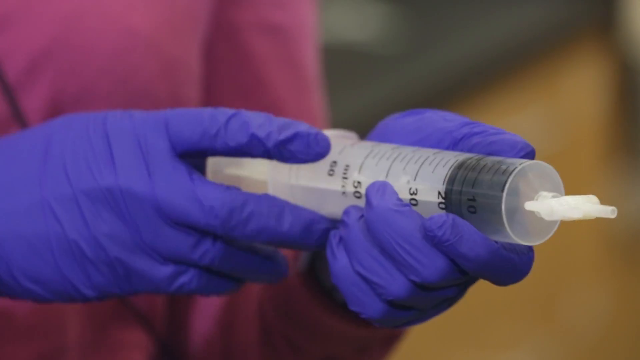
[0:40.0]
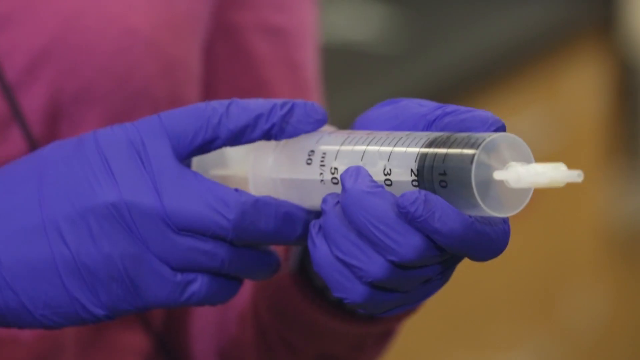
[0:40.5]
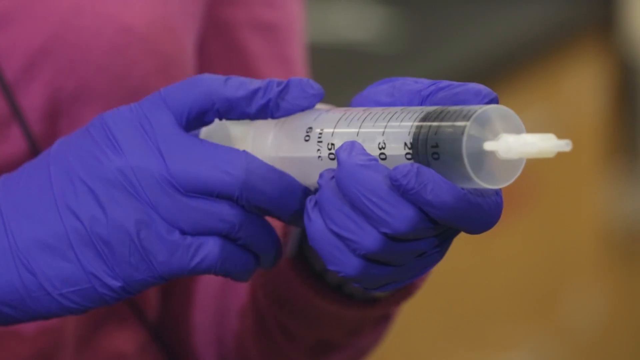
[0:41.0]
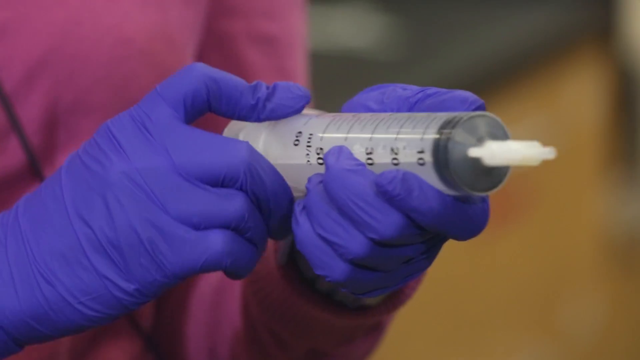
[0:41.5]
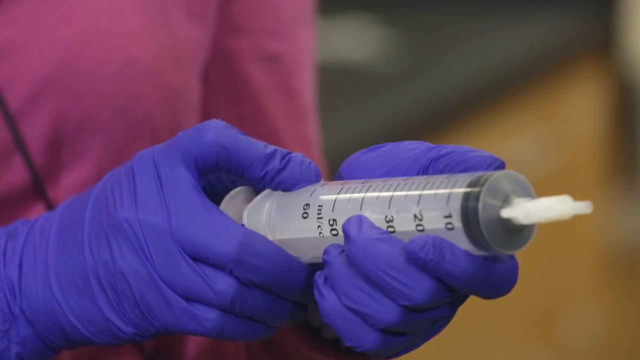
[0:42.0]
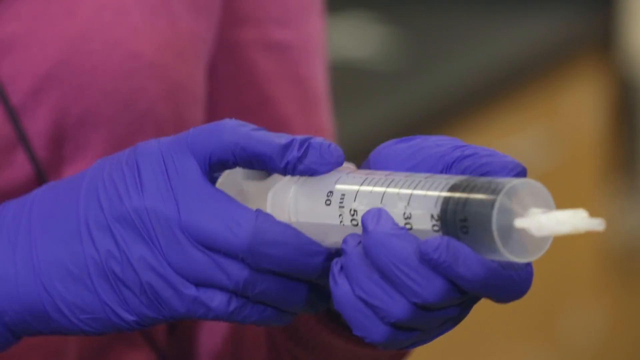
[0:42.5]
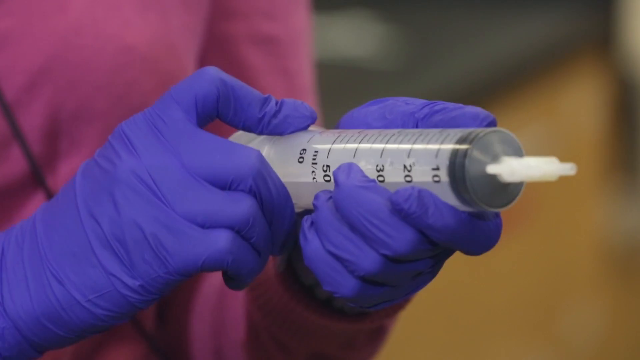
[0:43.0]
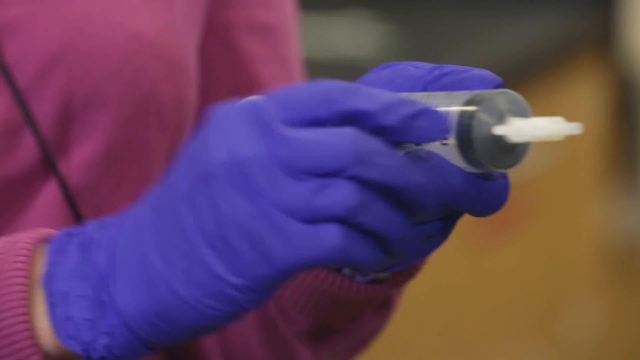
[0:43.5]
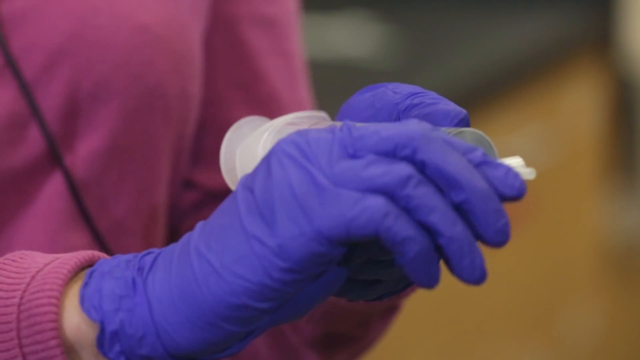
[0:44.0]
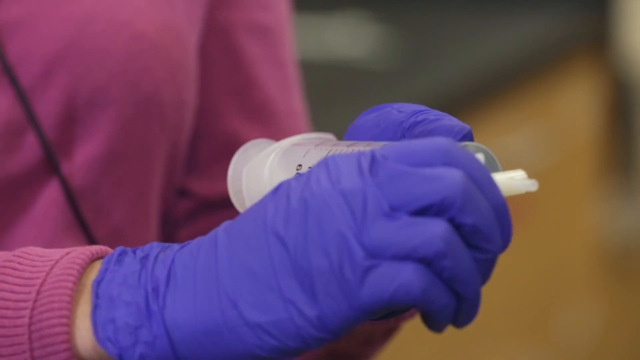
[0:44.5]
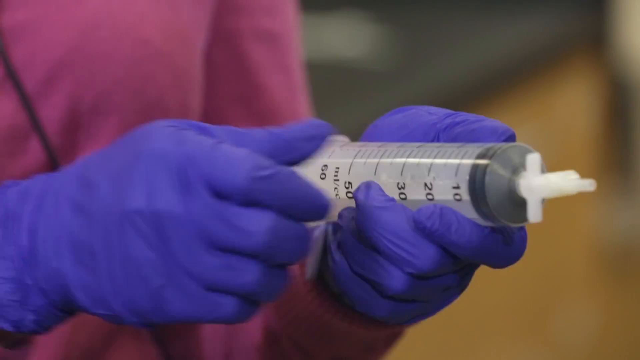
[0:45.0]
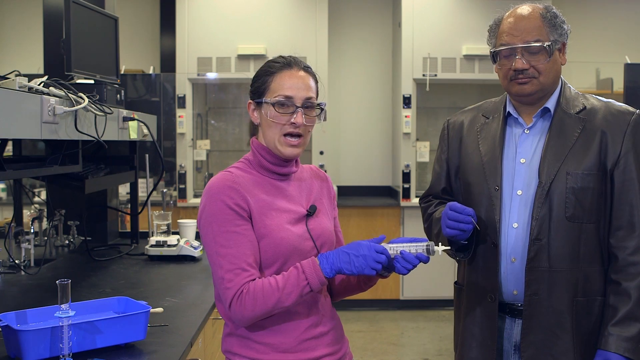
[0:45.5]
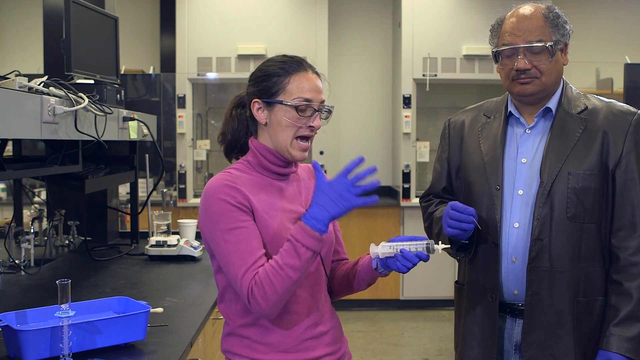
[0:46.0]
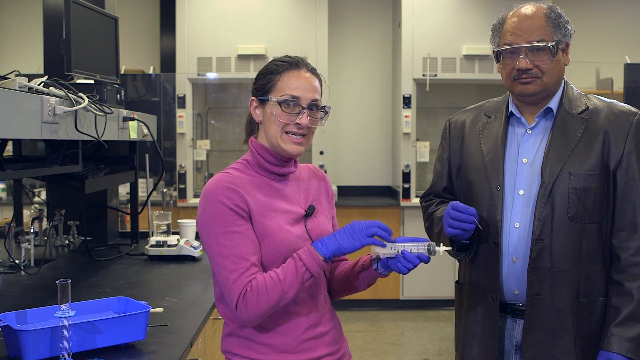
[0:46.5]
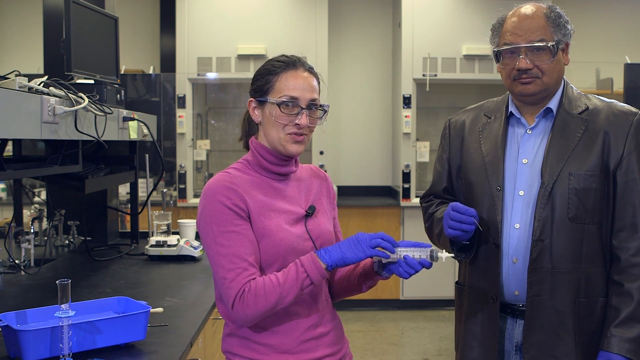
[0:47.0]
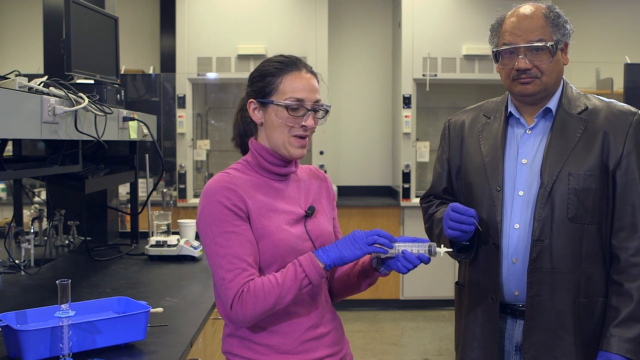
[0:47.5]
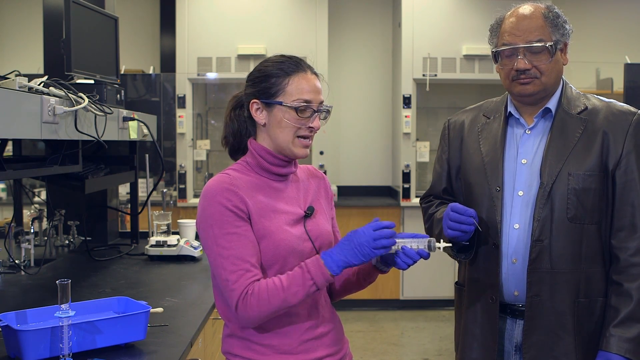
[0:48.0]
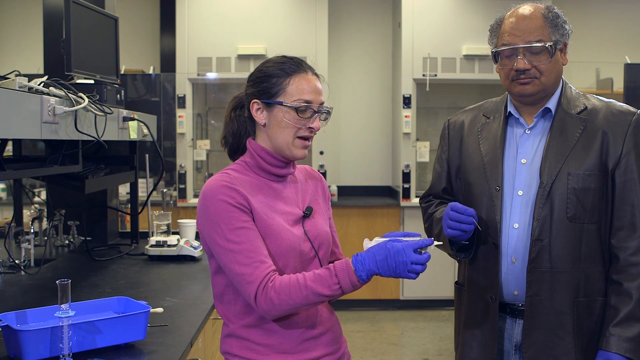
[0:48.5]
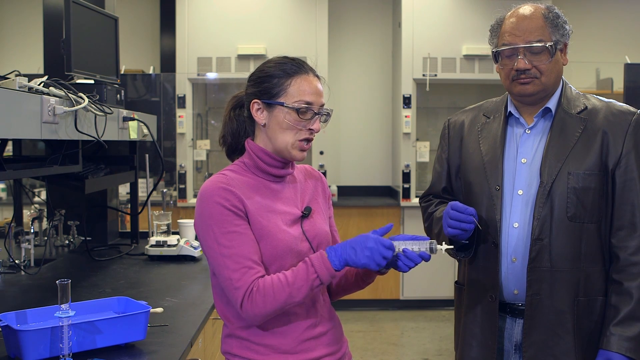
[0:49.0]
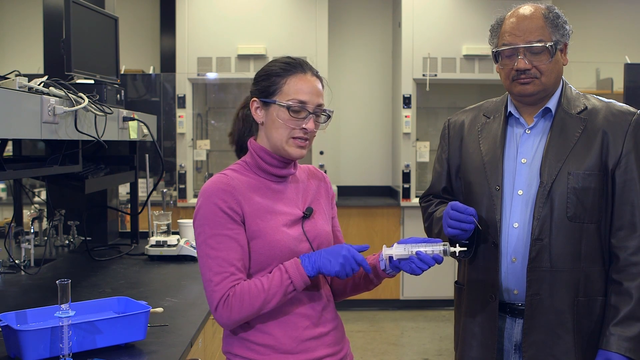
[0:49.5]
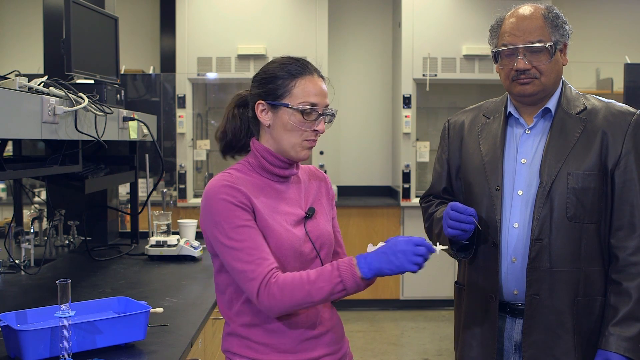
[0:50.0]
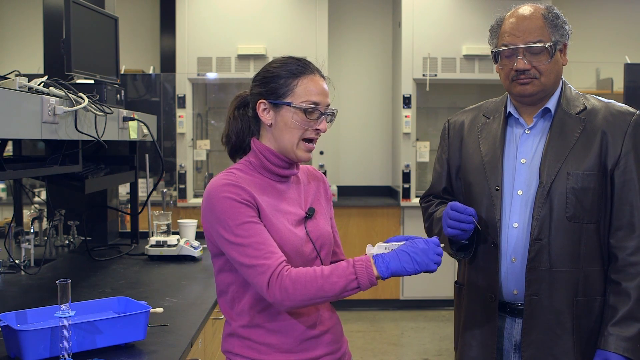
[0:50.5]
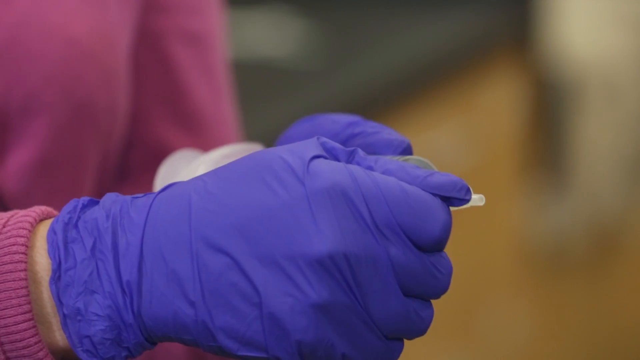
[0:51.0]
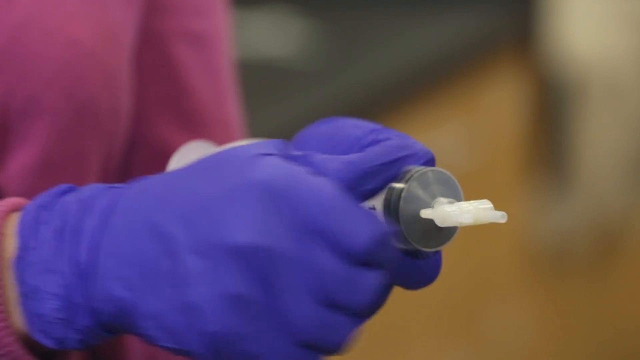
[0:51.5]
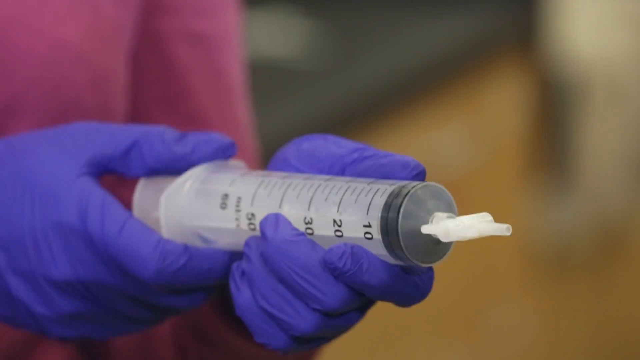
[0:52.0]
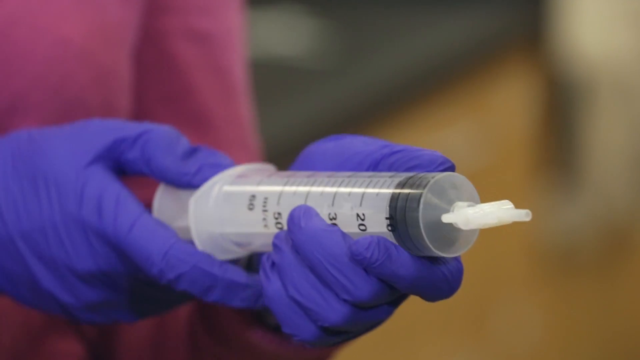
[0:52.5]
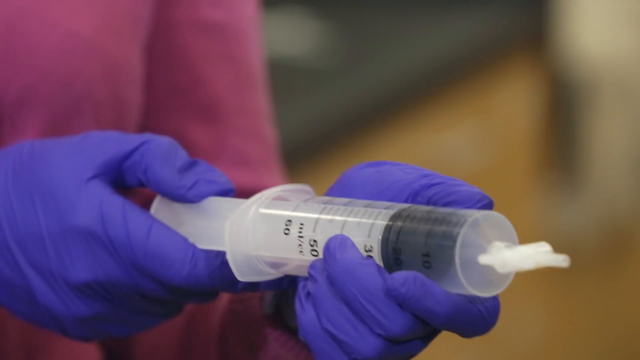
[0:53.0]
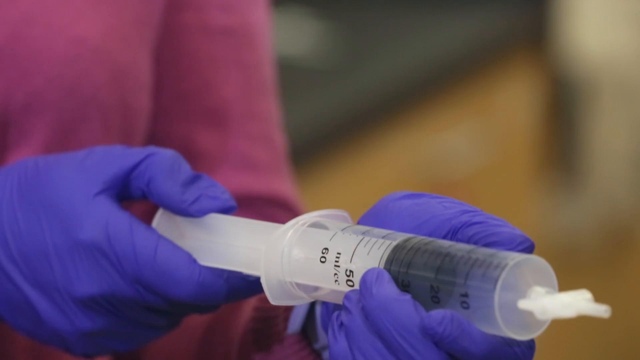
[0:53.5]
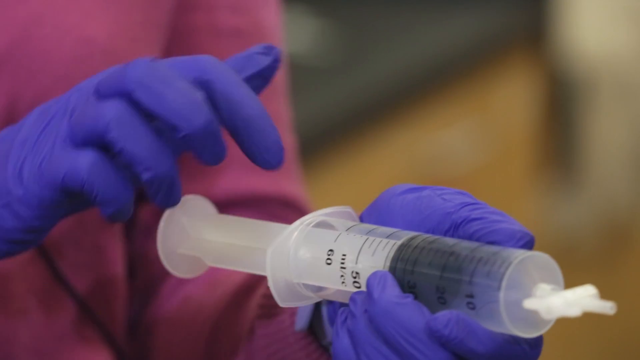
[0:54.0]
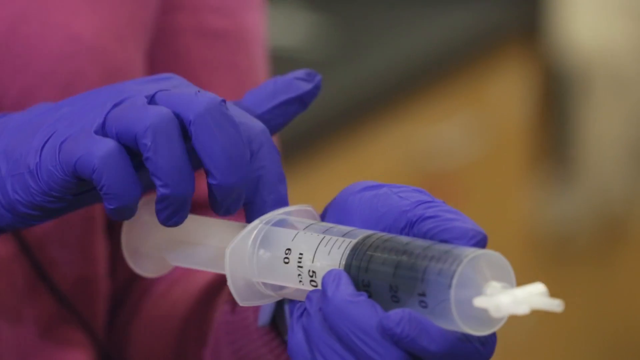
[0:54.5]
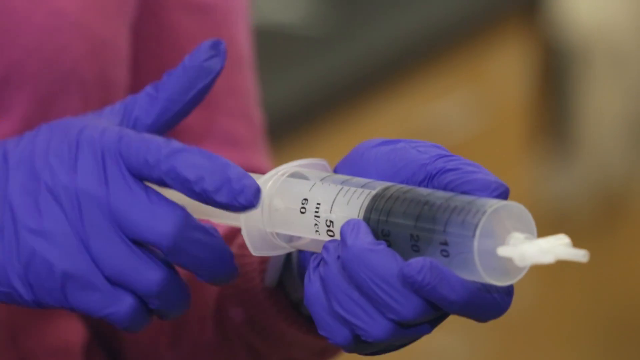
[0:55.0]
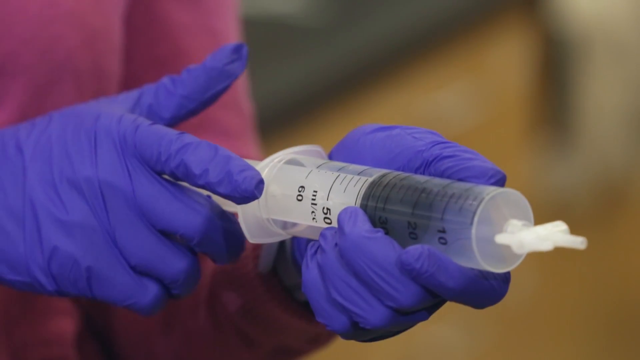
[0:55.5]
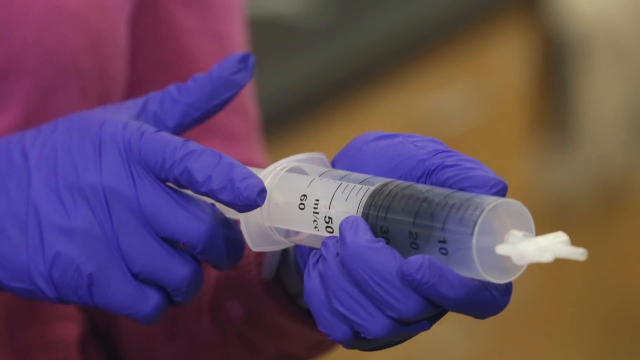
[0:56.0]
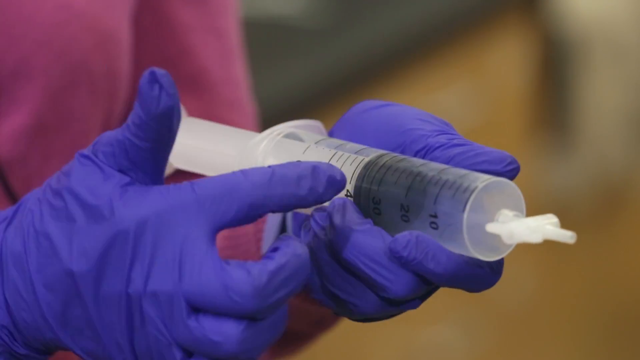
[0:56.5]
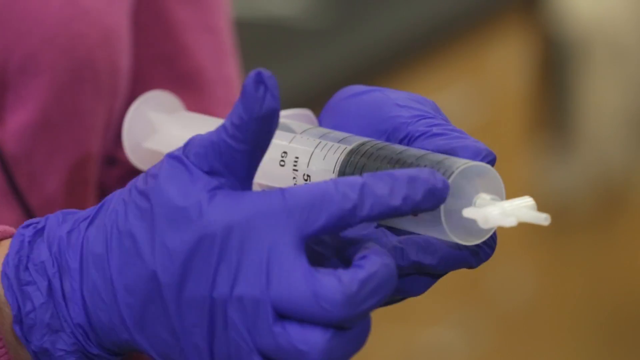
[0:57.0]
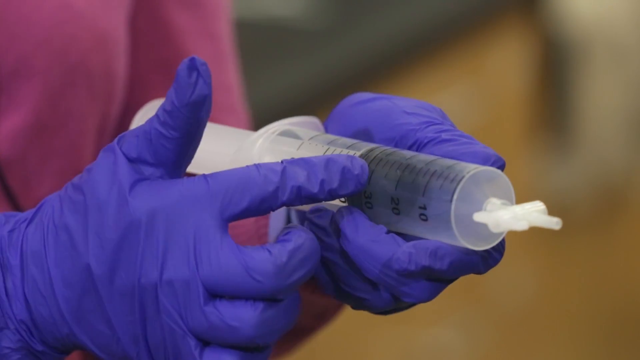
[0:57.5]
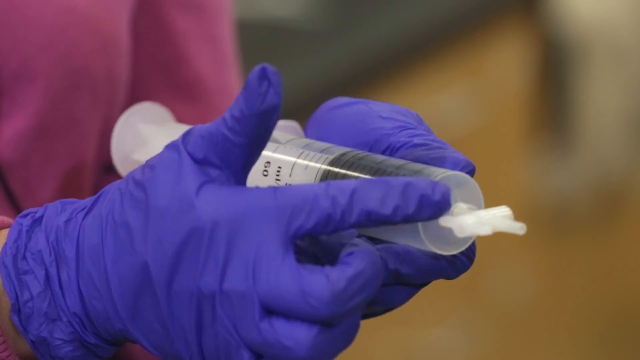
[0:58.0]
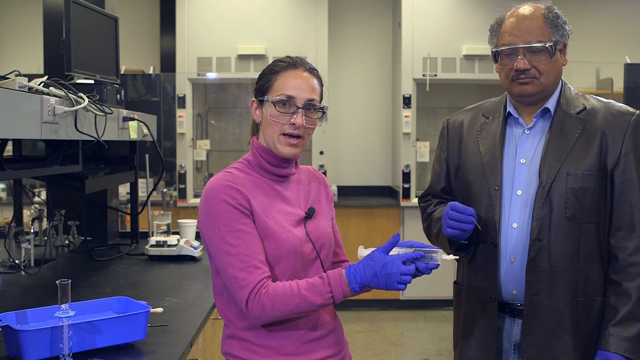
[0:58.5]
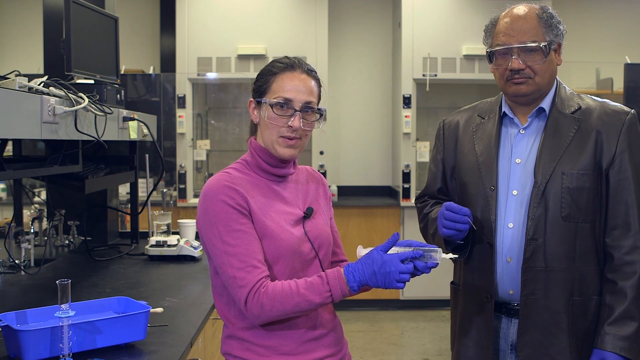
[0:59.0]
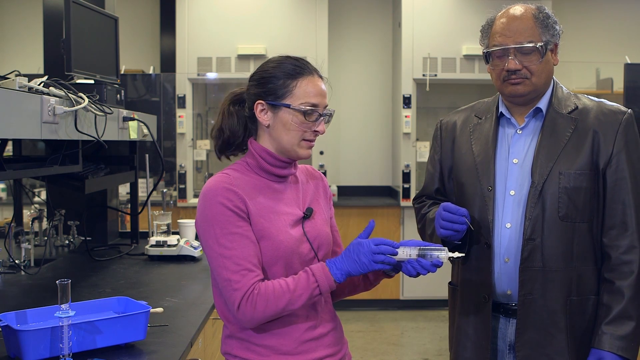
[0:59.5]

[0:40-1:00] In a close-up of her hands, the woman pushes the syringe's plunger back and forth, holding the syringe in her left hand while manipulating it with her right. The shot then returns to the woman and the man inside the laboratory. The man has his right hand up but is not doing anything; he is not moving or talking. The video then cuts to a close-up of the syringe held by the woman, where she seems to be showing where the liquid goes at the very top of it. The background behind the man and woman is a laboratory of some sort, with a brown floor and different pieces of equipment to the left of the woman.